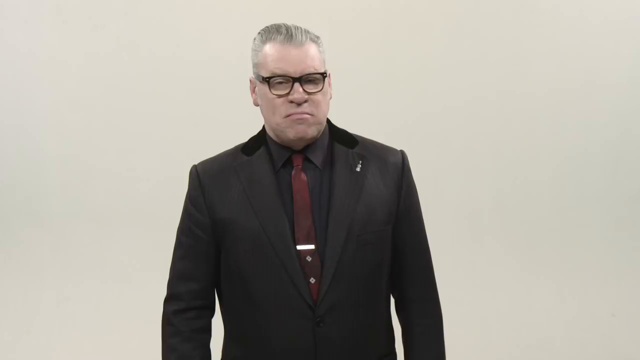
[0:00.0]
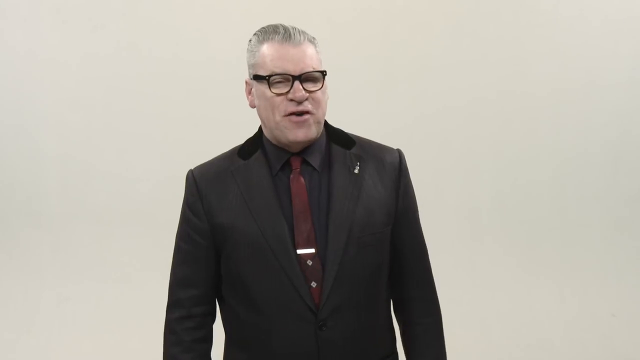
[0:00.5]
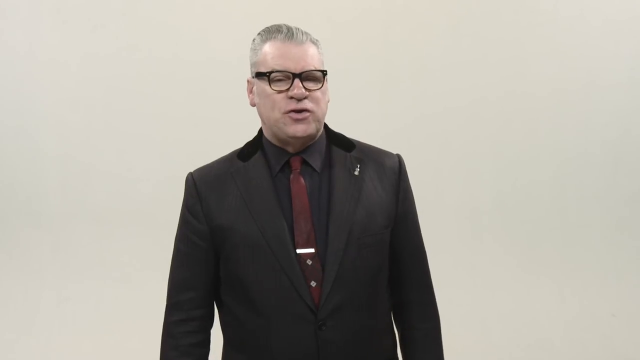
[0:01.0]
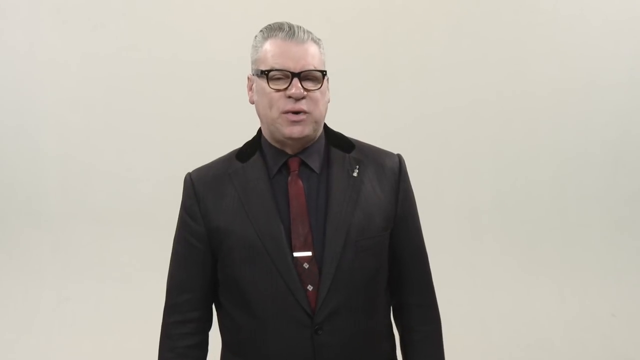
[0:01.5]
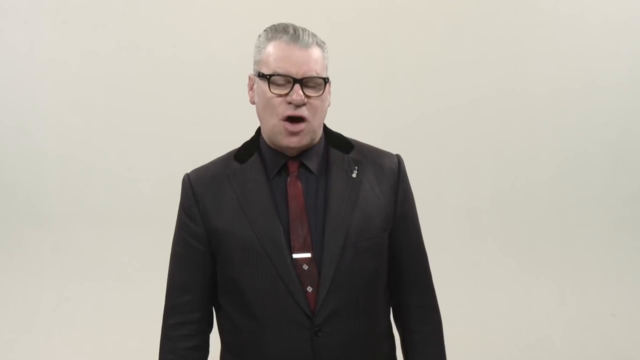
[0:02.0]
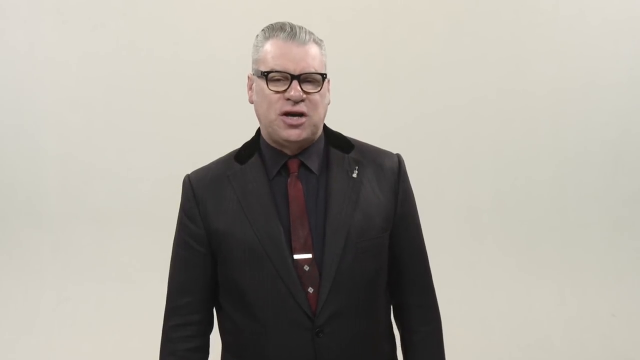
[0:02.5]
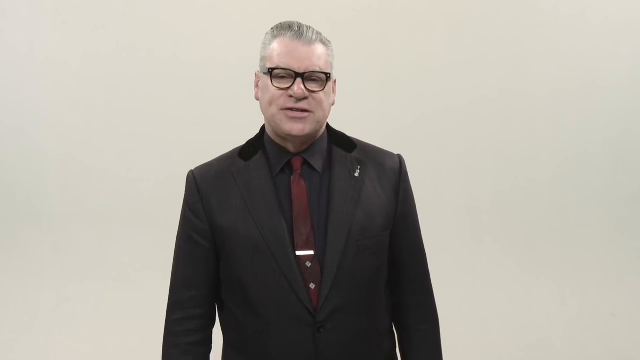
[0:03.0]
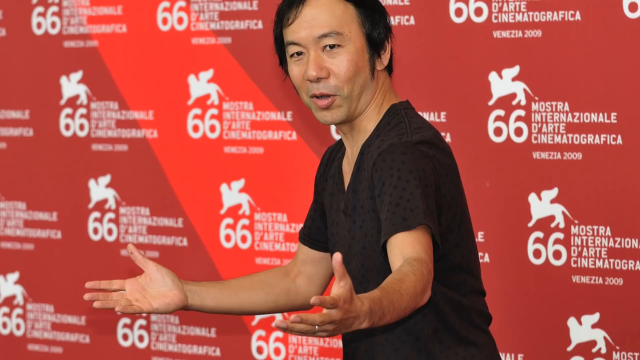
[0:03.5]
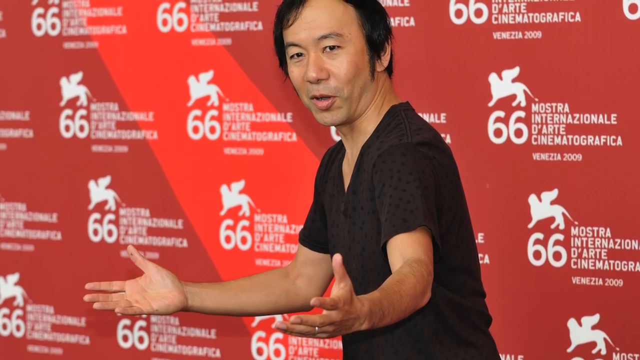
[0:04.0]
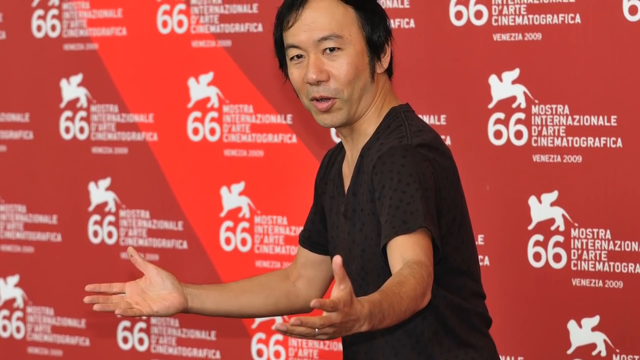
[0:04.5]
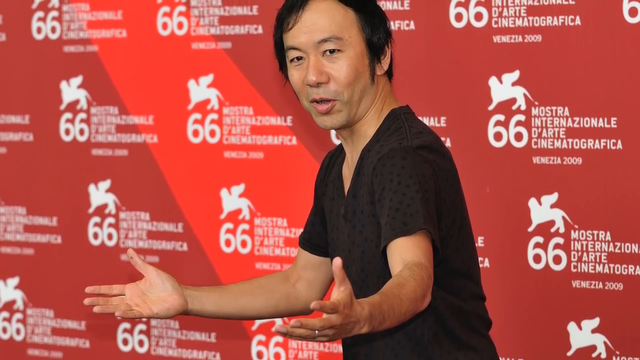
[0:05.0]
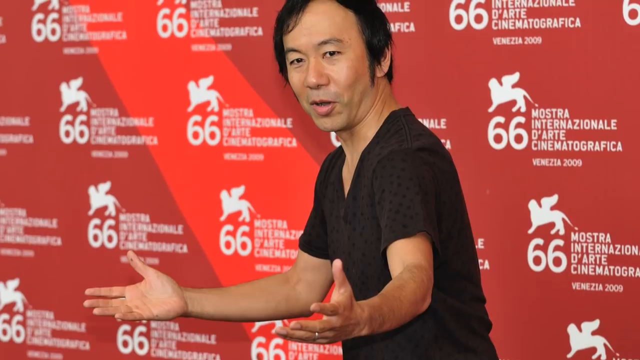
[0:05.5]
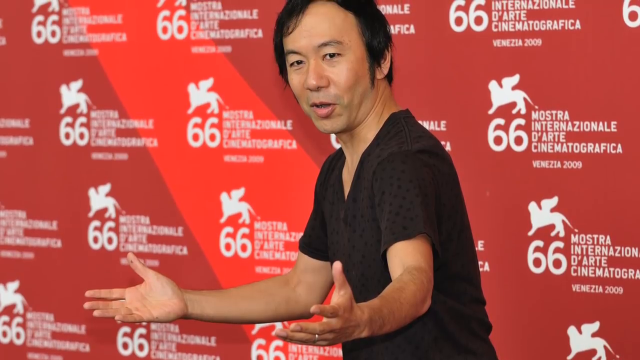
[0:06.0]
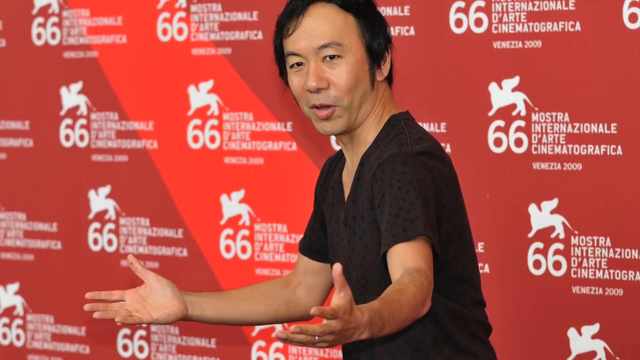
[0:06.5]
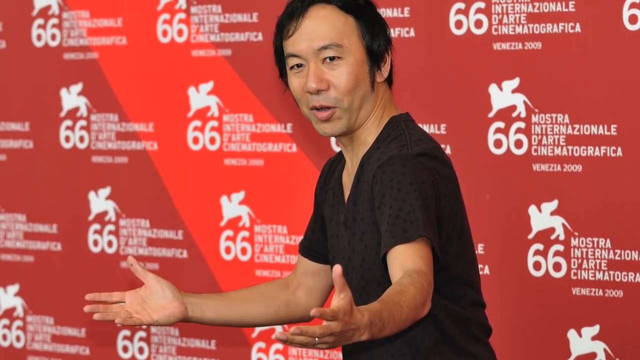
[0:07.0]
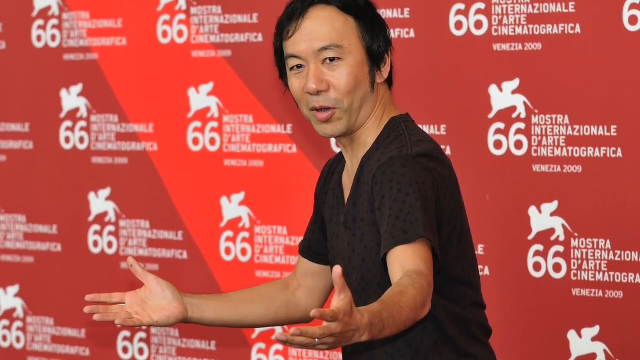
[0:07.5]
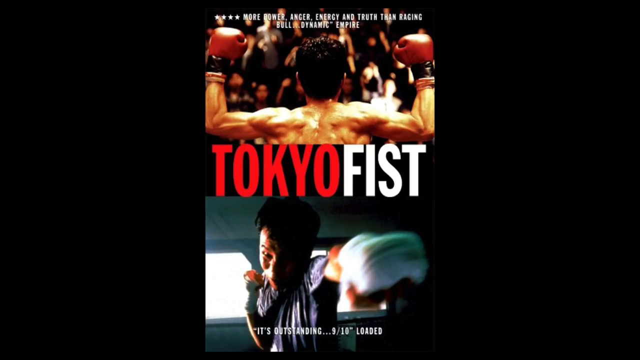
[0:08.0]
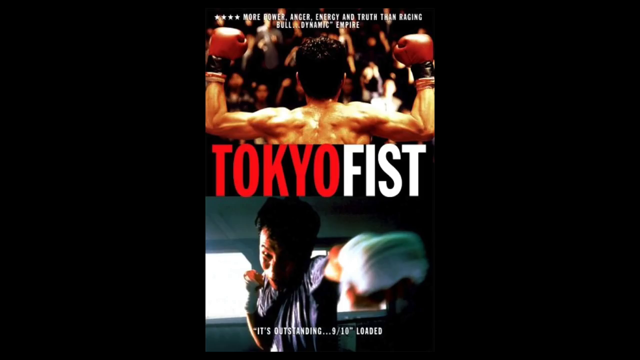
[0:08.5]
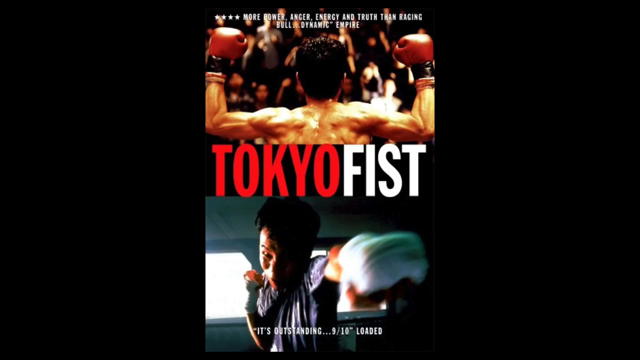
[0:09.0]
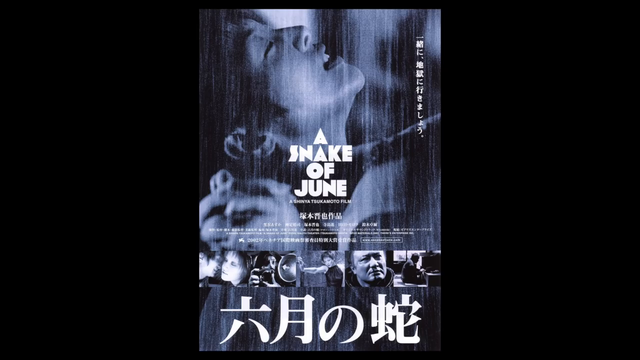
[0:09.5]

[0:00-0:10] A man stands against a white background. He wears a black suit, a black dress shirt, a maroon tie and a tie clip, and thick black glasses. His gray hair, with a receding hairline, is slicked back. His arms are down at his sides while he speaks. Next comes a photograph of a man with black hair in a black t-shirt, standing in front of a blue wall with numbers and words on it; it looks like a film festival. He holds both arms out in front of him with his palms facing upward, and he wears a wedding ring on his left hand. A movie poster then appears on the screen.